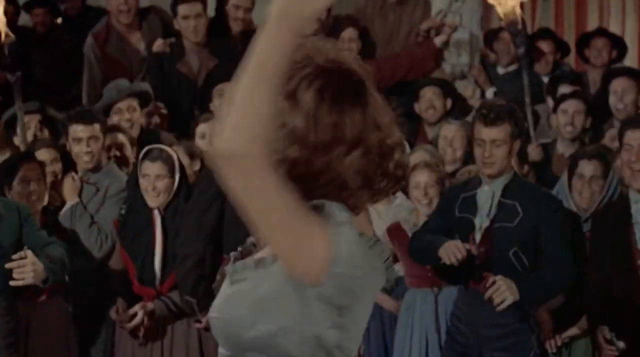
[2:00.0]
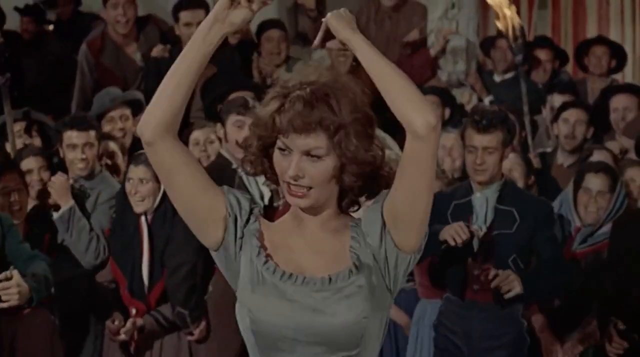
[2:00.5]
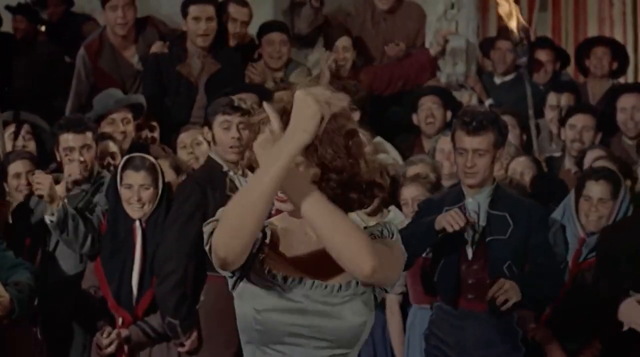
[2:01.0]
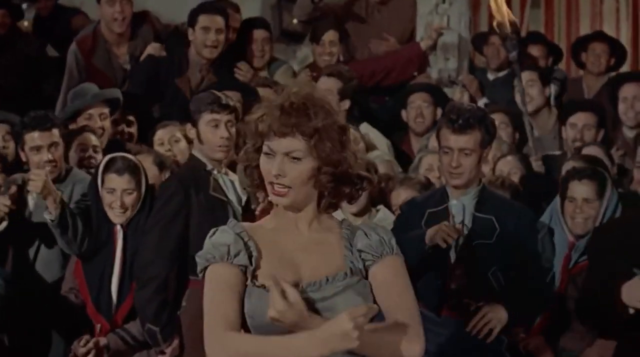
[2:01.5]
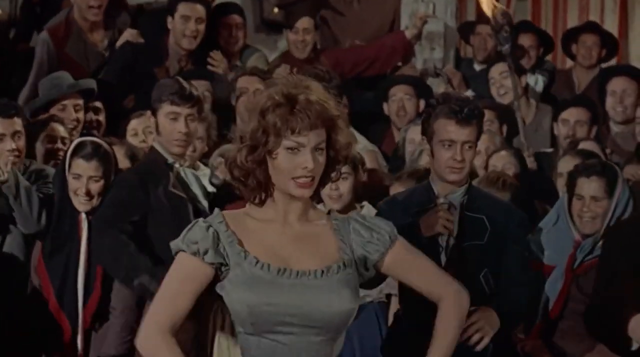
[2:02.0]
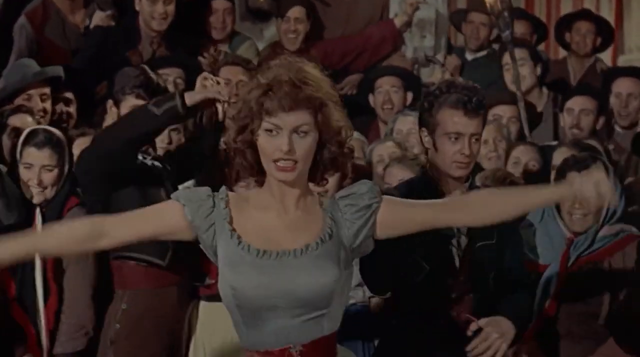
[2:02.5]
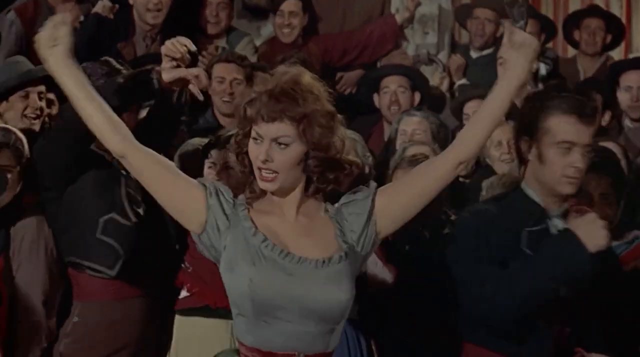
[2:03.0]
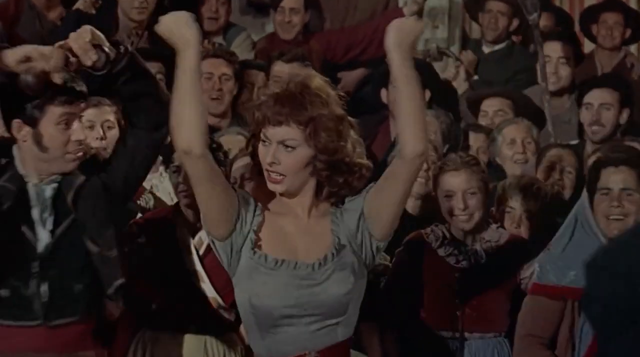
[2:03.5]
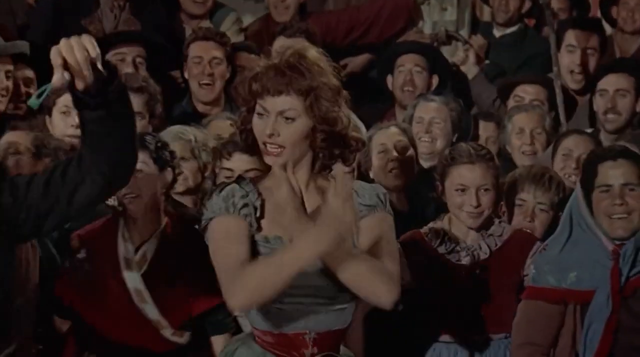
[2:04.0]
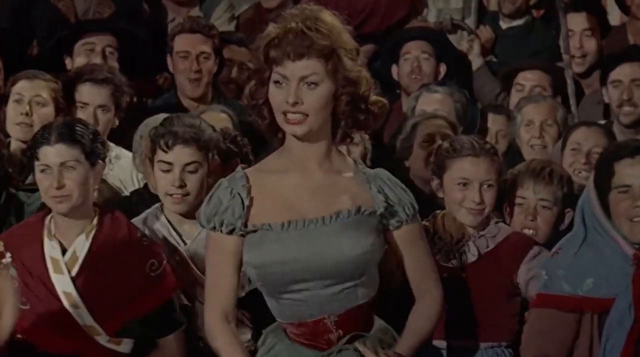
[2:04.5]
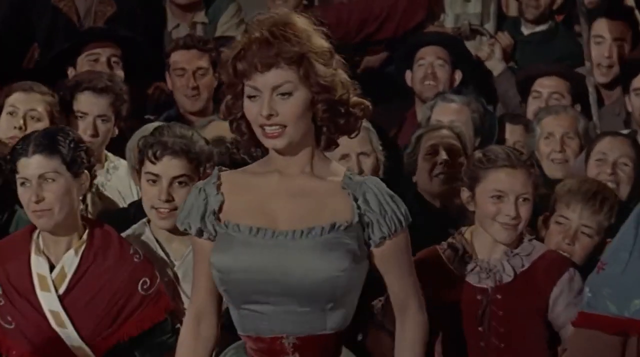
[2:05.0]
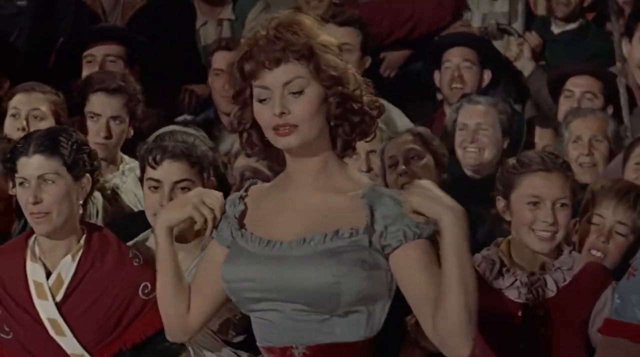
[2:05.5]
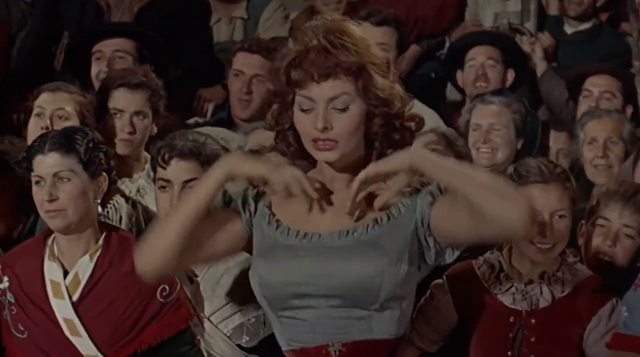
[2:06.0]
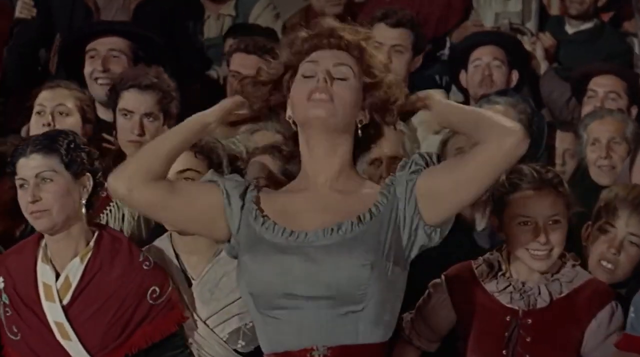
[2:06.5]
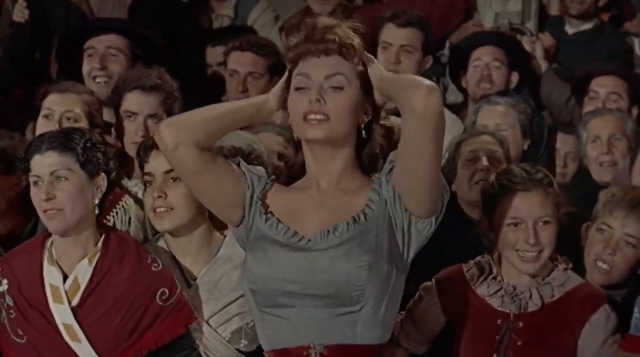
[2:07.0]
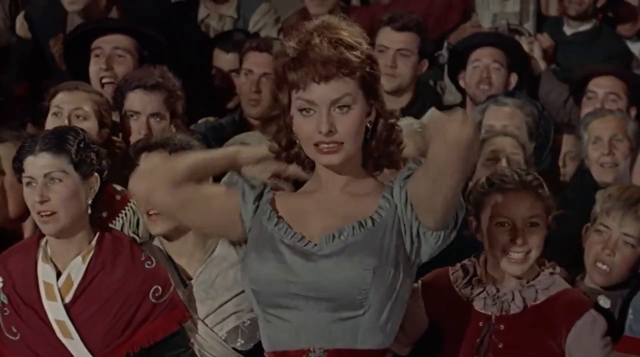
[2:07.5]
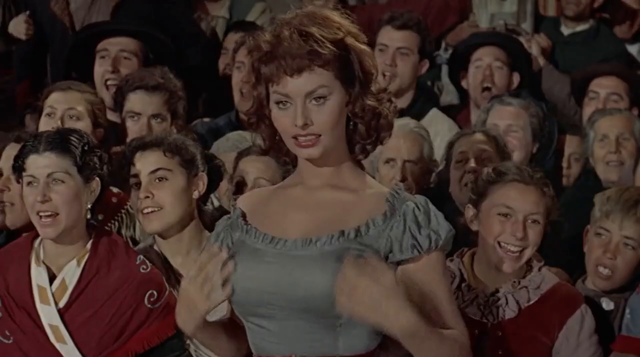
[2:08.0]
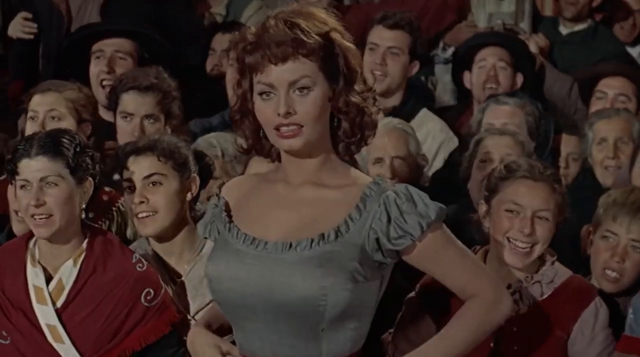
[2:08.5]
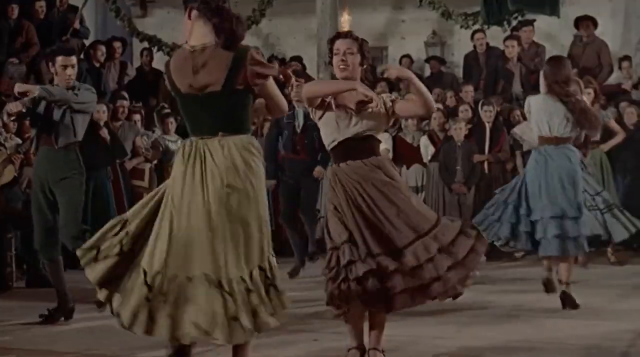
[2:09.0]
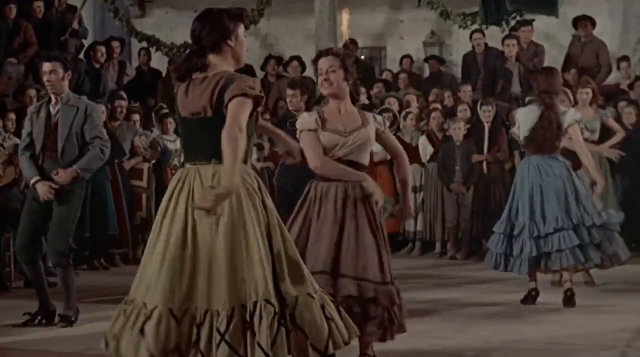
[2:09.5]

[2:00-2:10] The woman works her way backwards into the audience. When she reaches it, she plays with the puff sleeves of her dress to show her shoulders a bit more, then ruffles her hair to give it more volume, almost as if to say she has finished her dance. As the camera pans back round to the performance area, many more people have got up to dance, mostly women, apparently all women. They dance in the space, not in a flirtatious way like the first woman, and wear much more normal clothes; they seem to be people from the audience. People are smiling. The partner and the other man are not shown at this point, only the main woman, the rest of the audience and the women dancing.